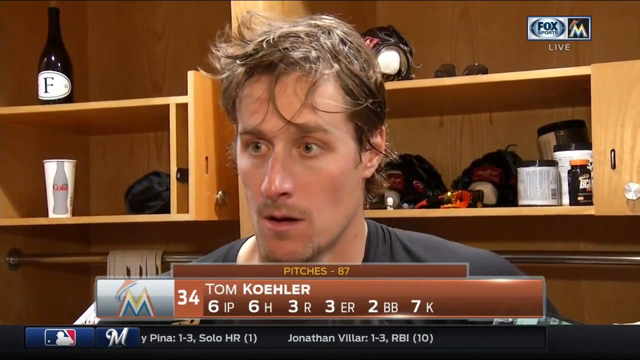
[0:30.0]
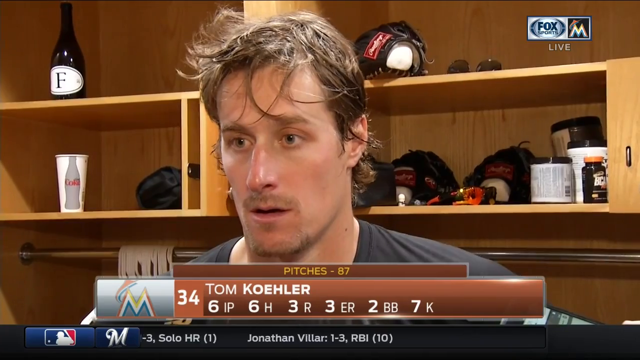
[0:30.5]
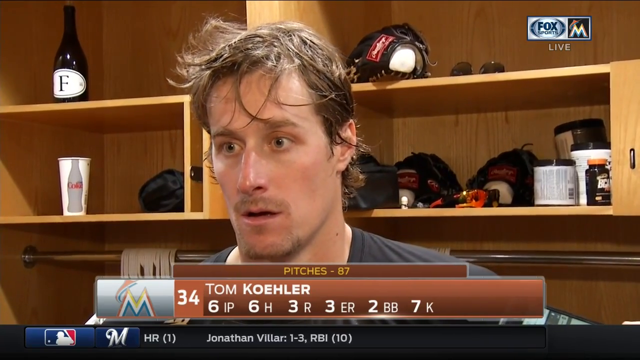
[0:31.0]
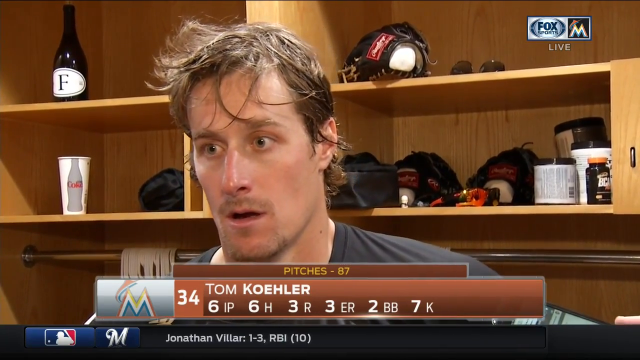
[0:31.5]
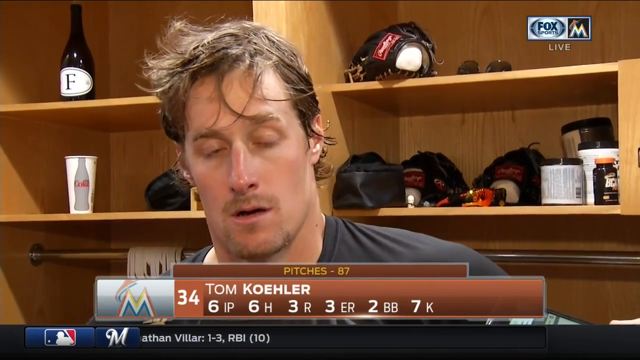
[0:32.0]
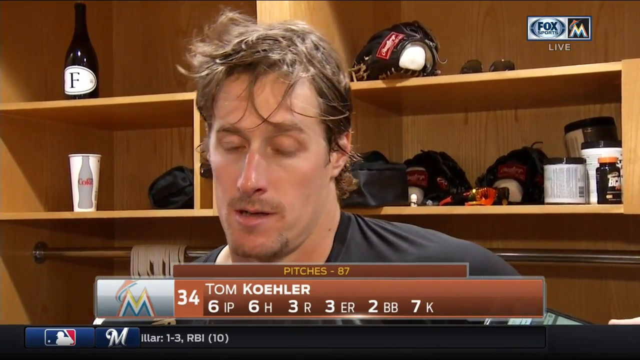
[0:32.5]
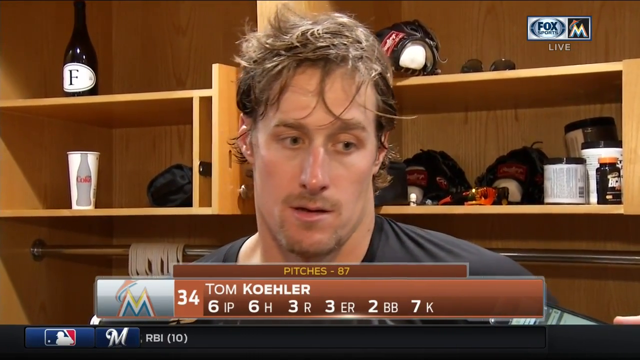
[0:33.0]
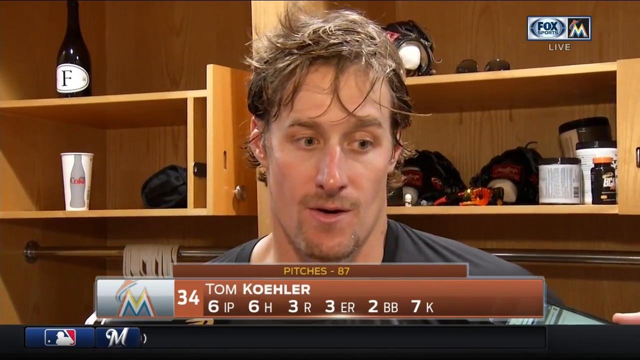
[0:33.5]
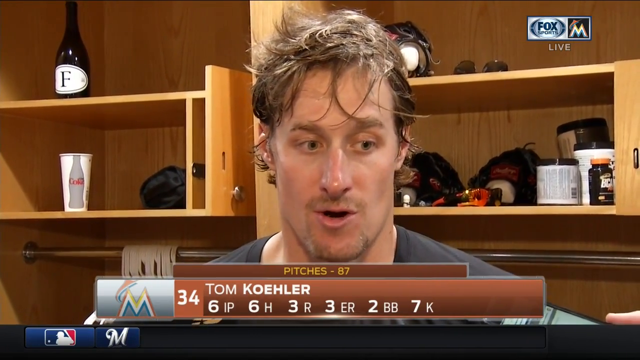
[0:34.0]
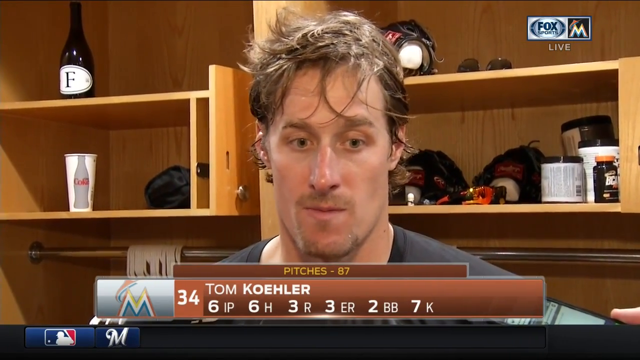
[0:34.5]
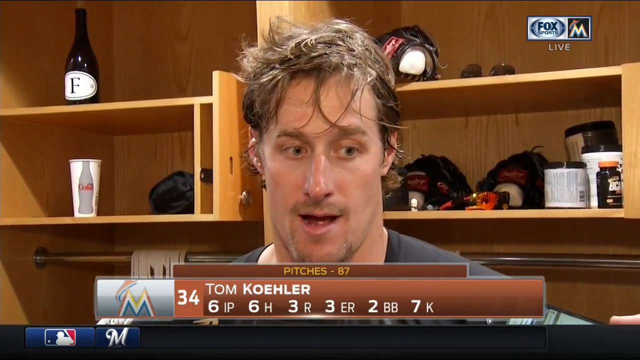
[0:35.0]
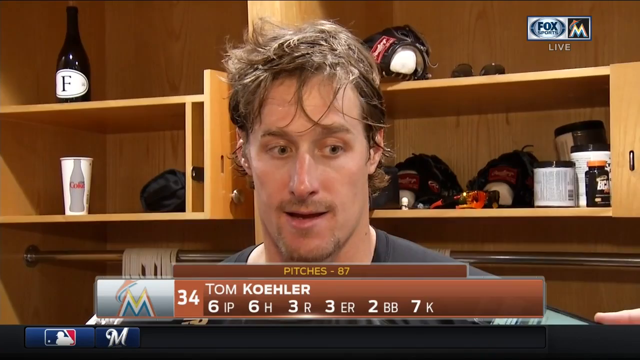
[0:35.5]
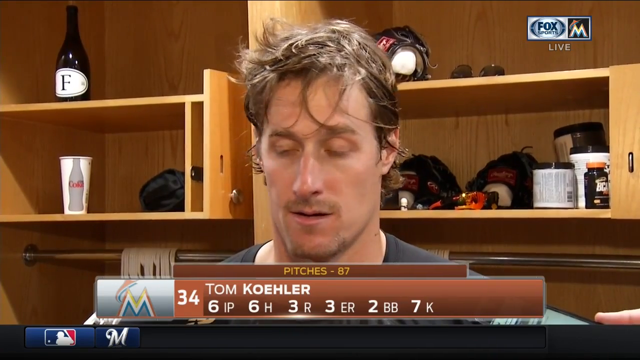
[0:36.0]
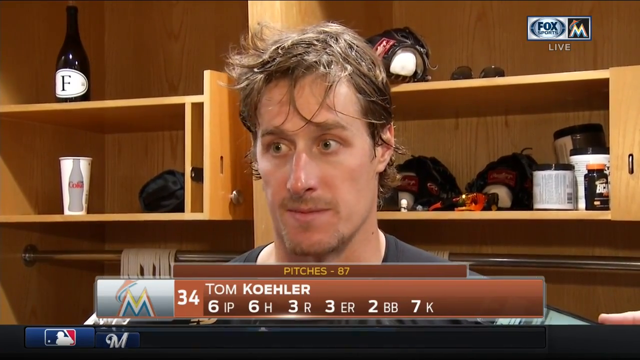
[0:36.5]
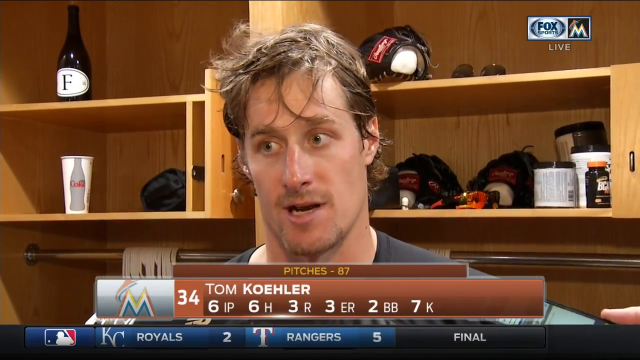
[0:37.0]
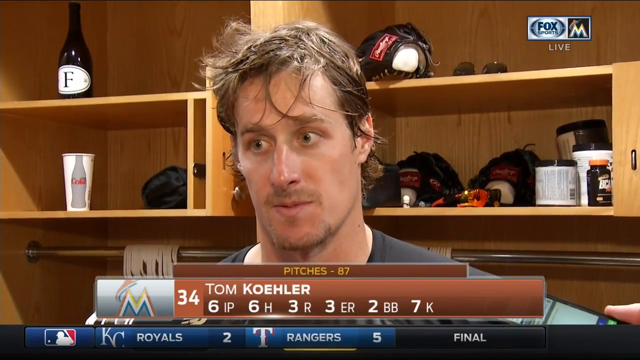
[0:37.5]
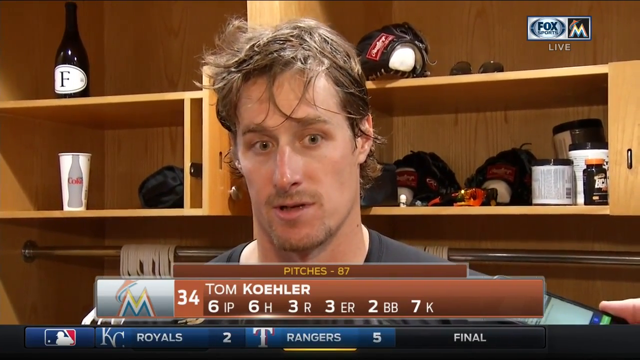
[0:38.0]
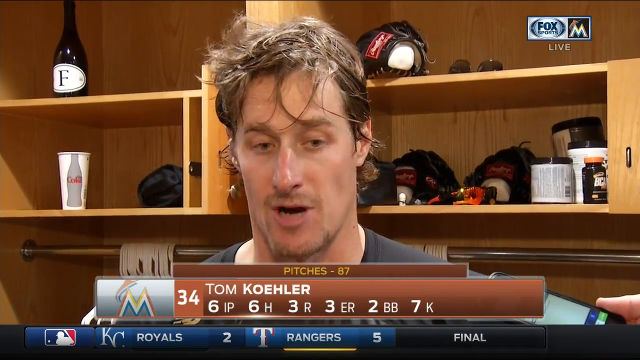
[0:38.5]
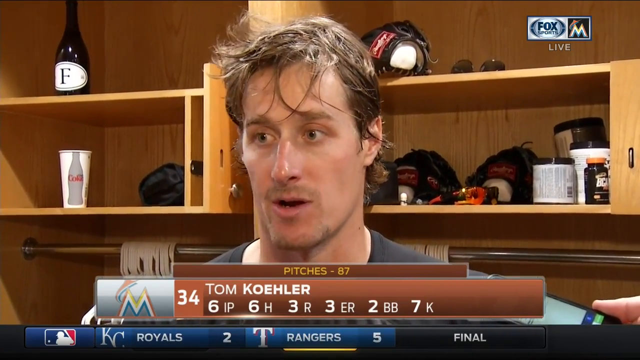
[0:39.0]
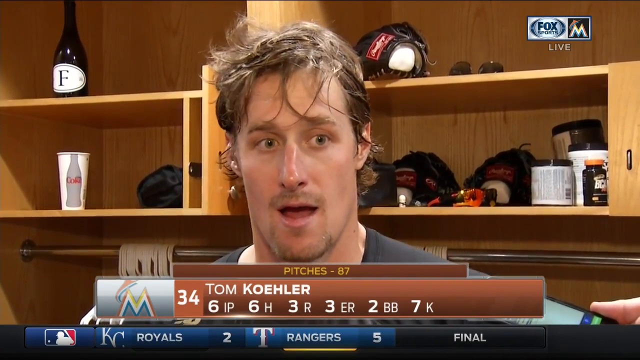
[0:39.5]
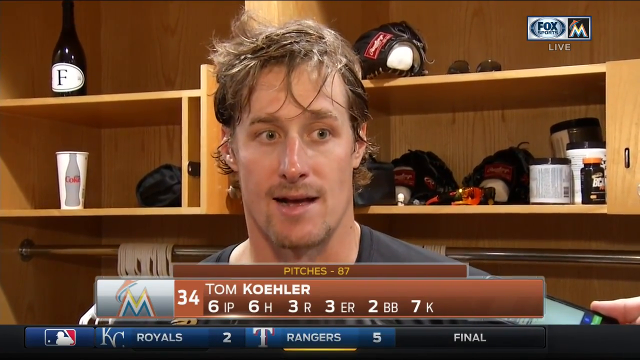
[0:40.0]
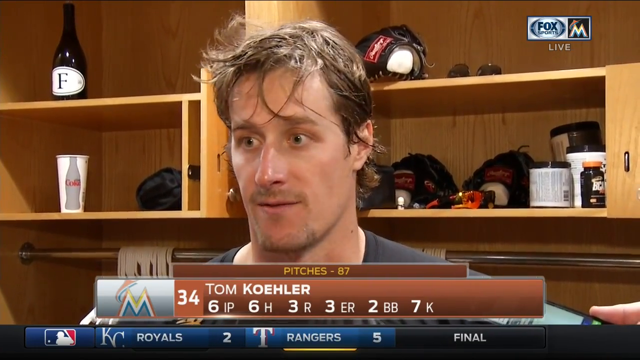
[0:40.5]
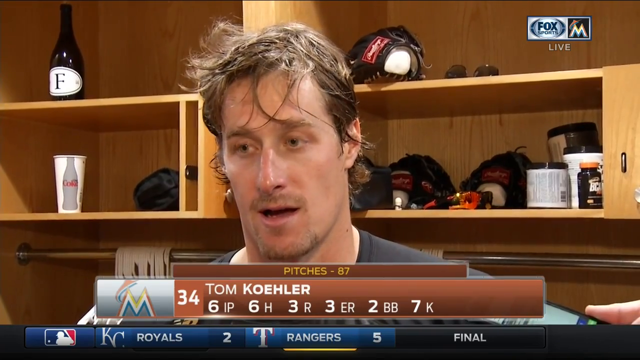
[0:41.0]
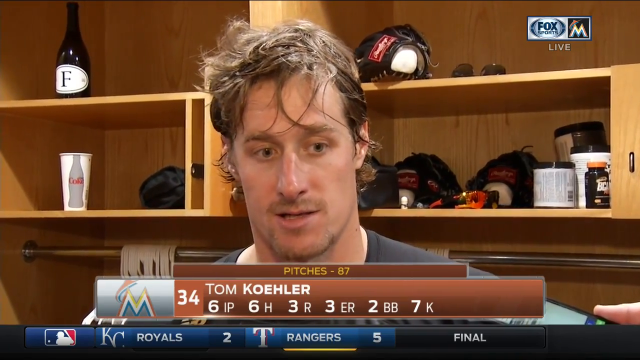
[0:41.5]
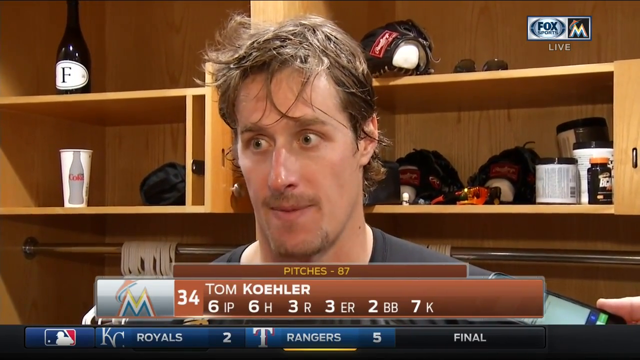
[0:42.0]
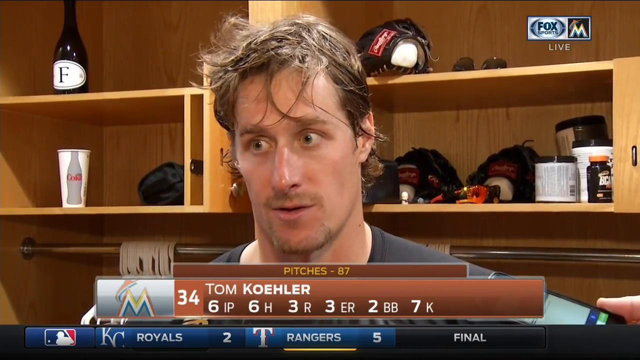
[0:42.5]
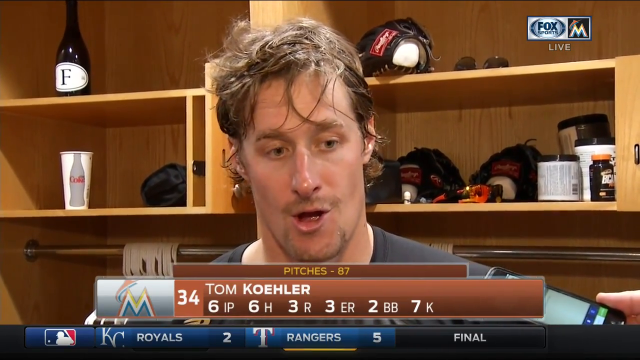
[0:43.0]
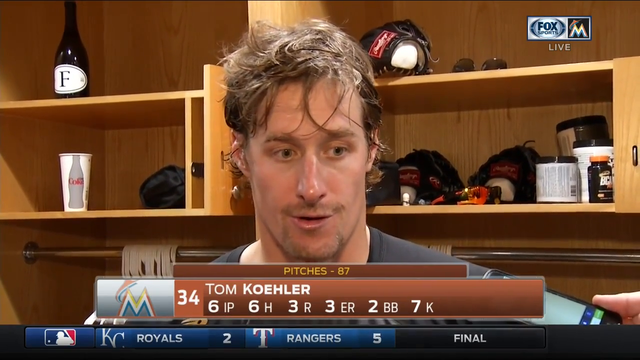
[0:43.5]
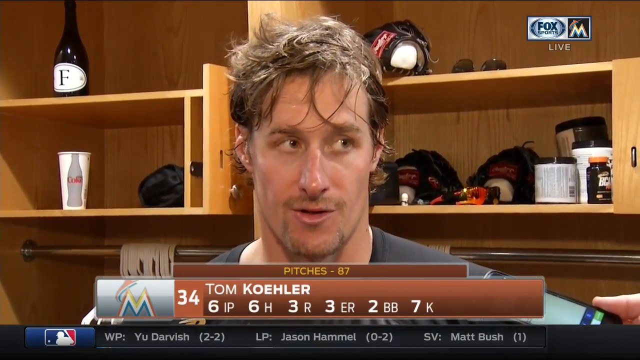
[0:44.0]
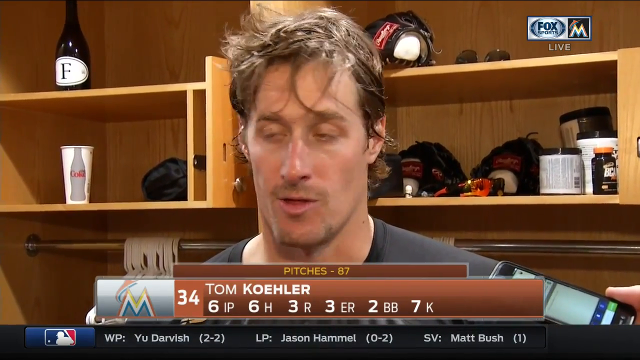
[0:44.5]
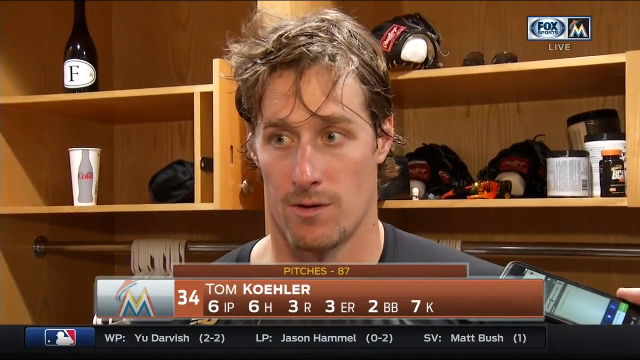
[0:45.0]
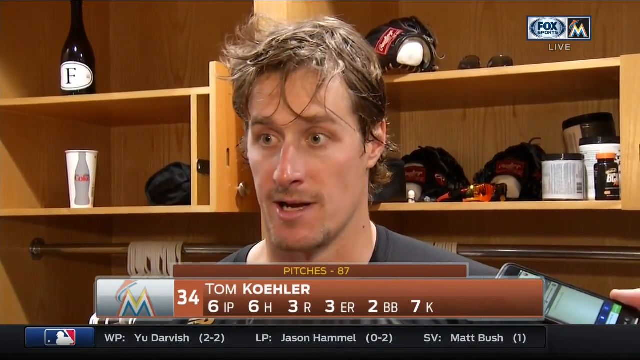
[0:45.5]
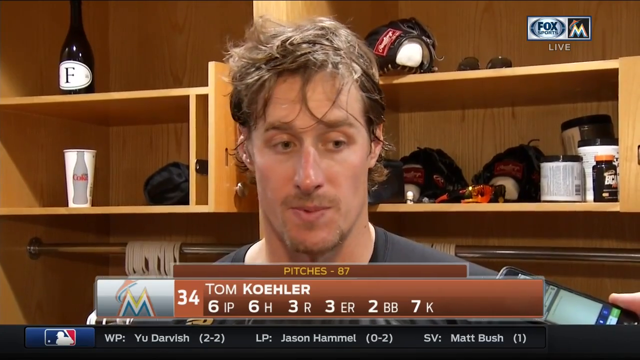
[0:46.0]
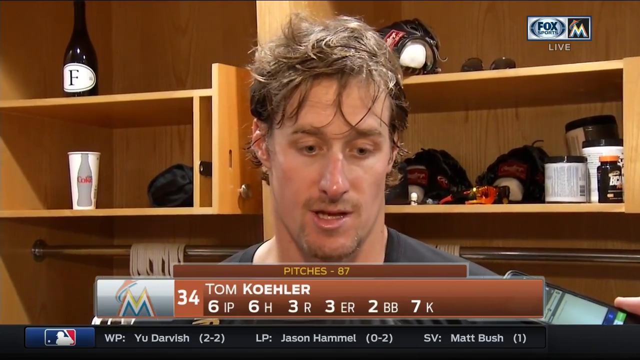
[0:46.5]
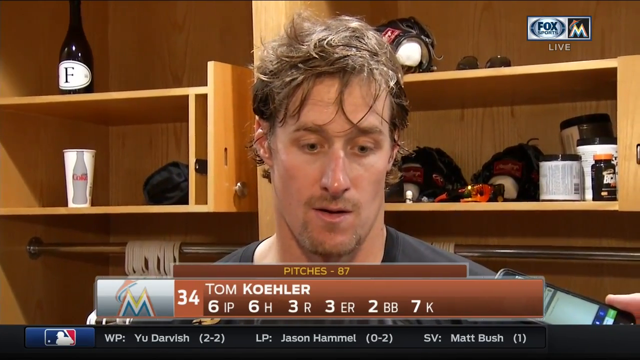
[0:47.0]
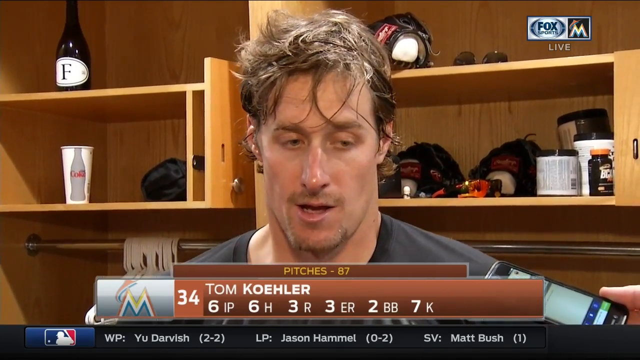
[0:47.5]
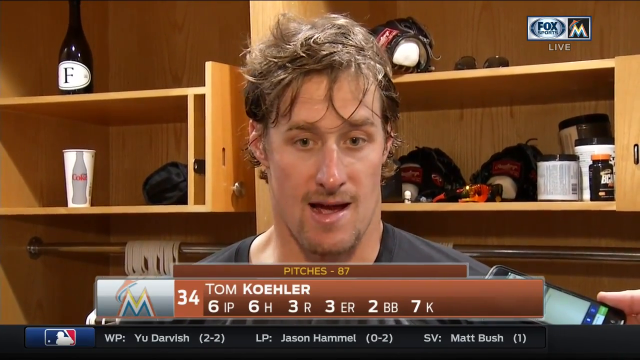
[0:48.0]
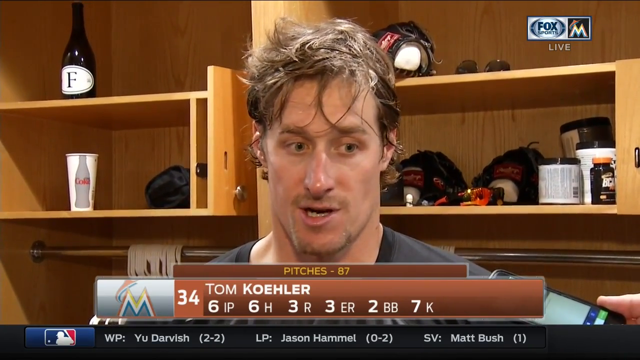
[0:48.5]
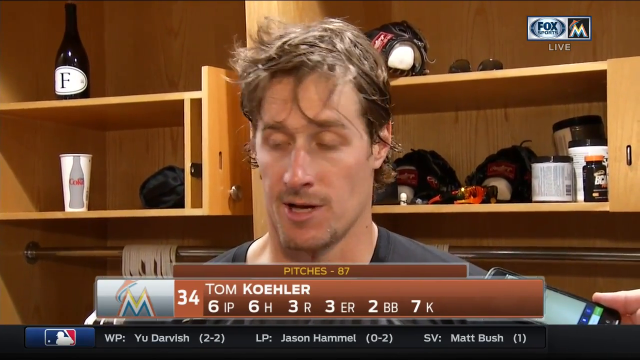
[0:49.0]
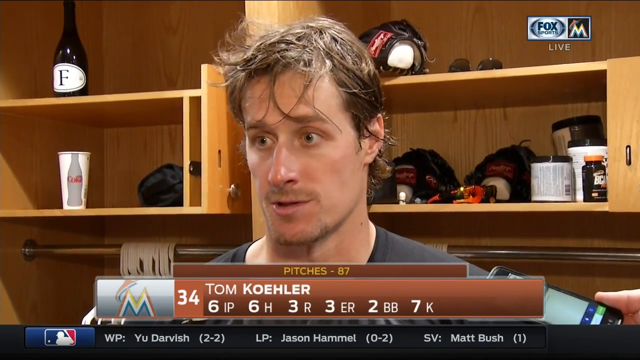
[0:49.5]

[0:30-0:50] The interview continues. He appears to listen to a question and then responds. A reporter holds an iPhone to record his response. On the shelf in the back is a bottle of wine with a big F on the label, apparently red wine. On the shelf below is a white paper cup with the image of a Coke bottle on it. There is a mitt in the back, and on the right, higher up, is what looks like a mitt with a baseball in it, something white, and a pair of sunglasses. The shelf below holds all kinds of gear: some kind of containers, possibly vitamins or pills, with unreadable labels, and some mitts.